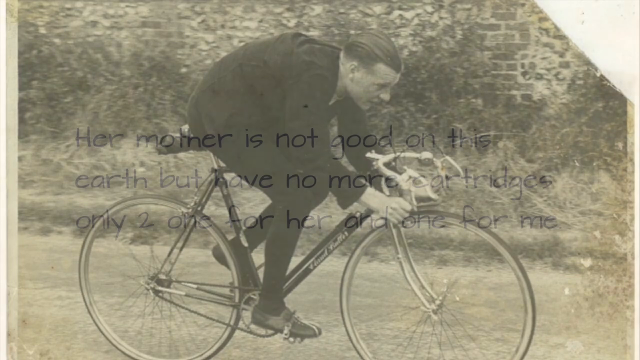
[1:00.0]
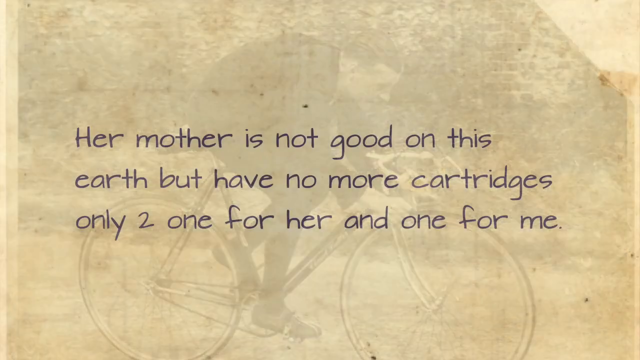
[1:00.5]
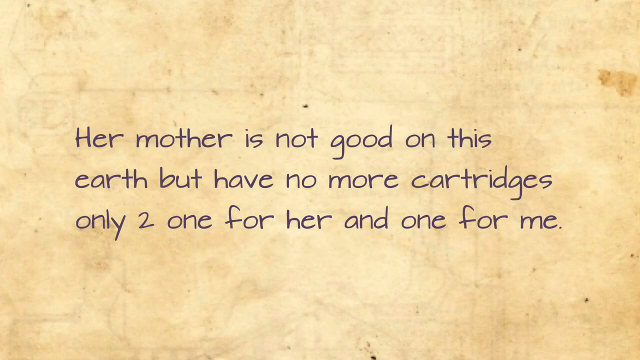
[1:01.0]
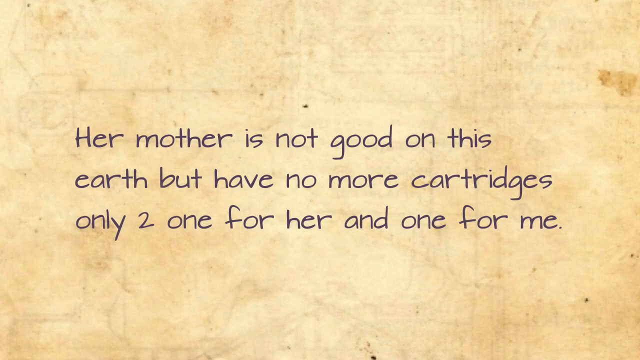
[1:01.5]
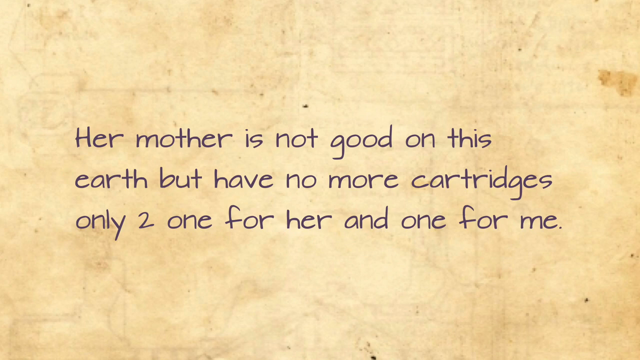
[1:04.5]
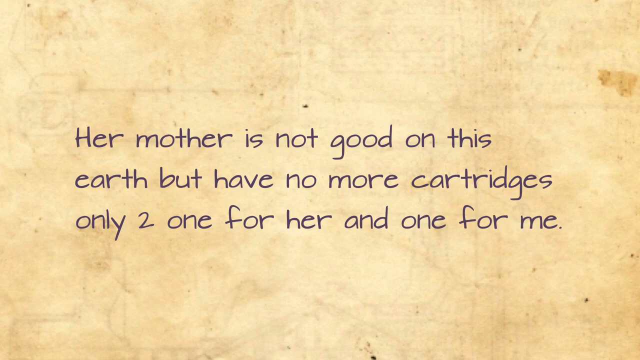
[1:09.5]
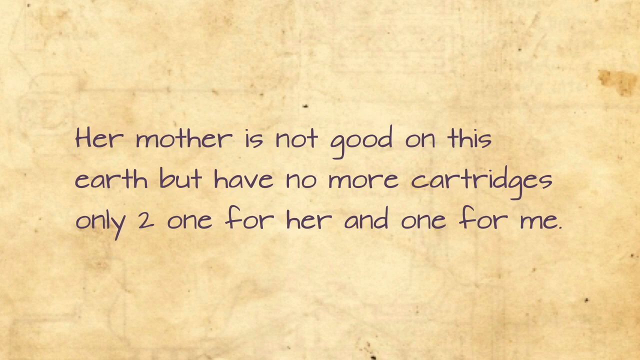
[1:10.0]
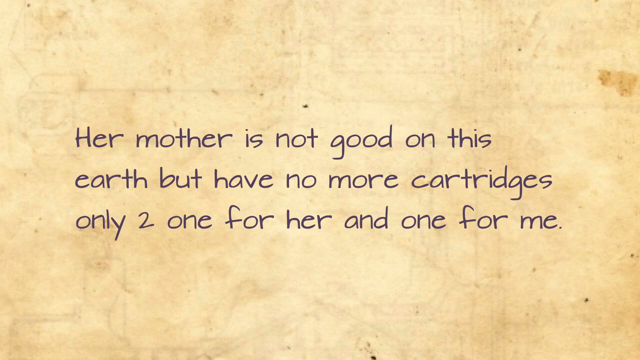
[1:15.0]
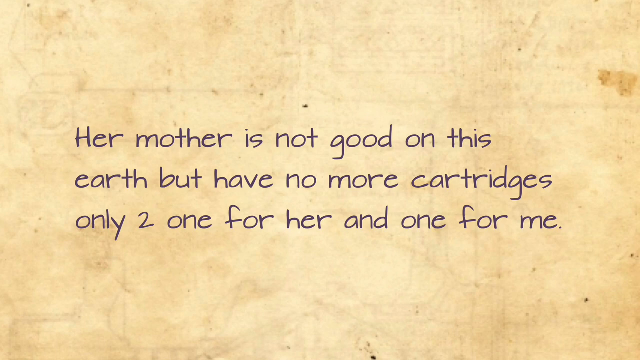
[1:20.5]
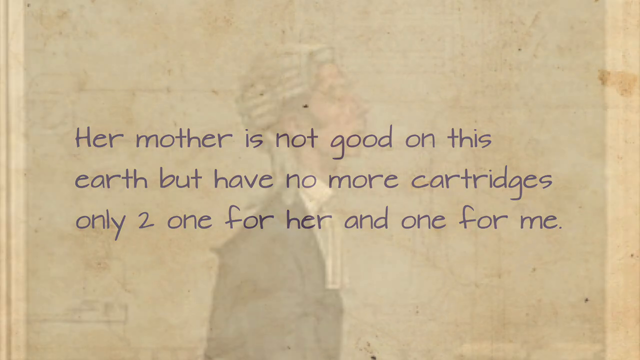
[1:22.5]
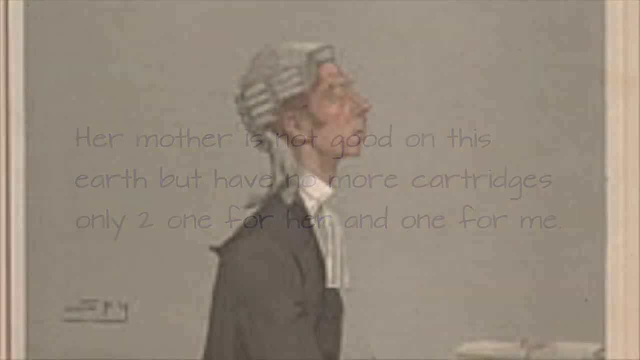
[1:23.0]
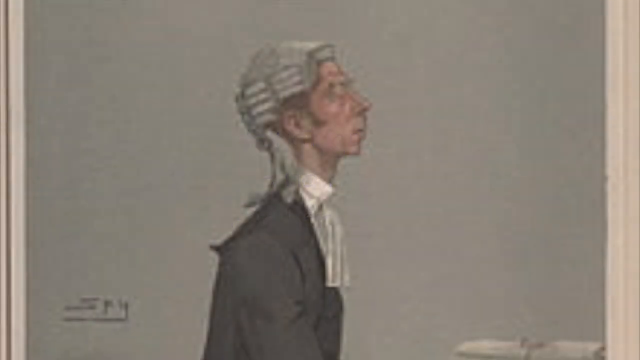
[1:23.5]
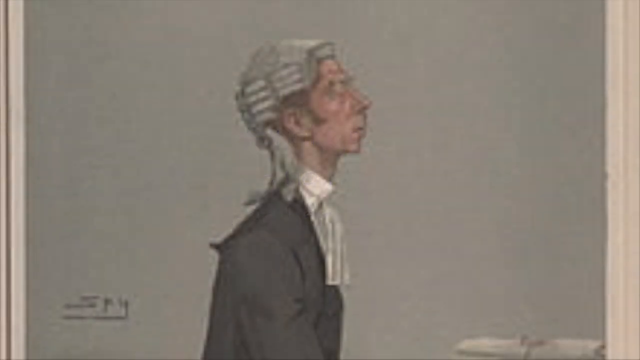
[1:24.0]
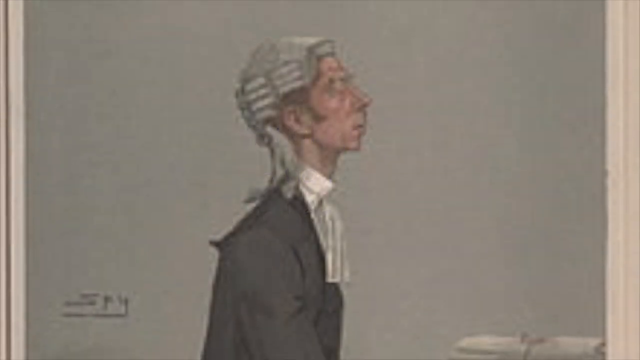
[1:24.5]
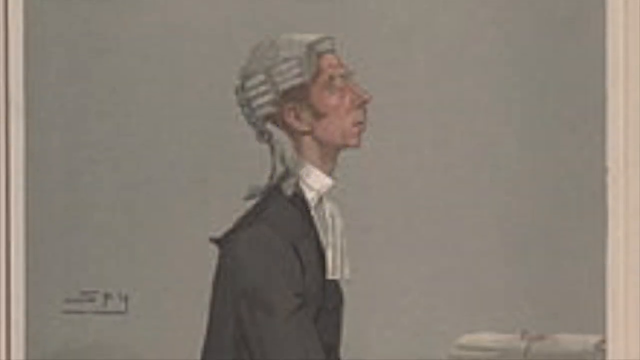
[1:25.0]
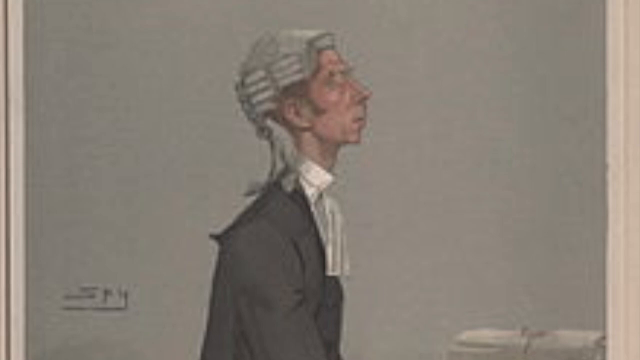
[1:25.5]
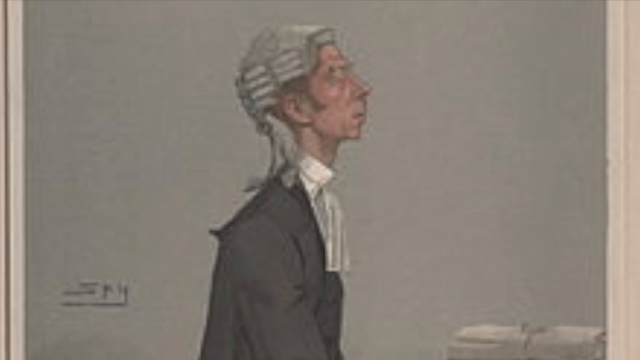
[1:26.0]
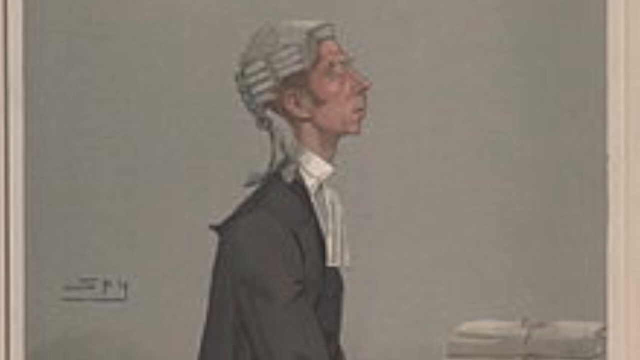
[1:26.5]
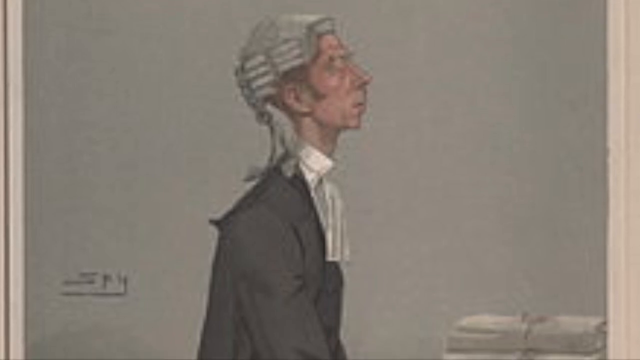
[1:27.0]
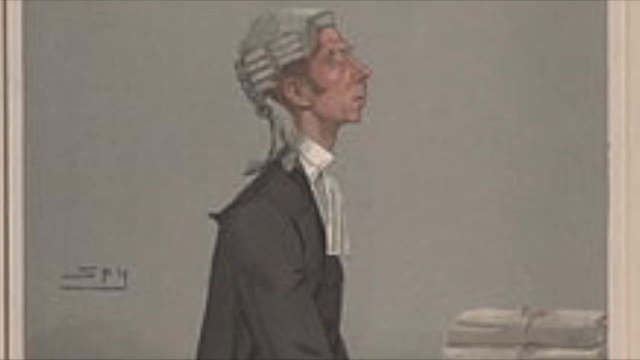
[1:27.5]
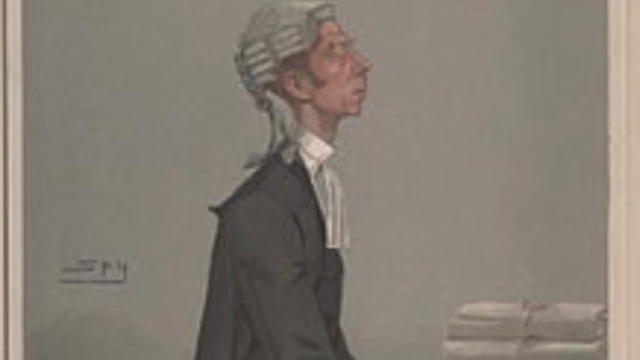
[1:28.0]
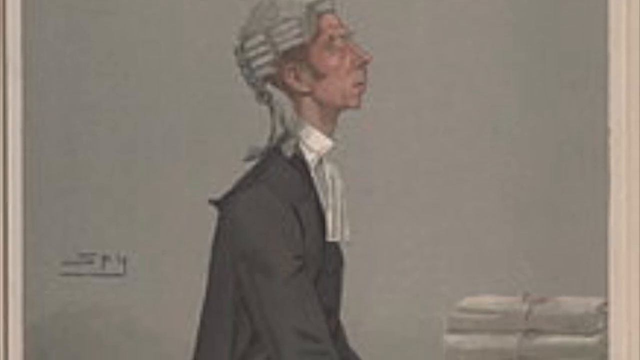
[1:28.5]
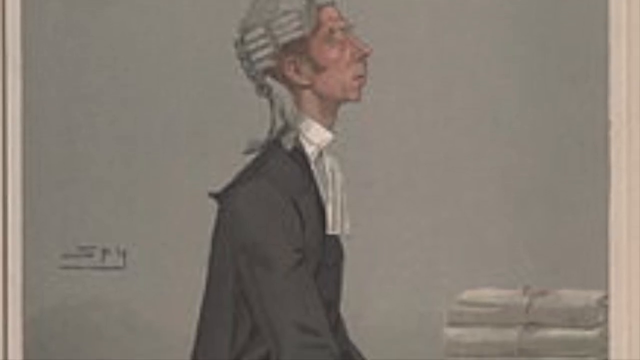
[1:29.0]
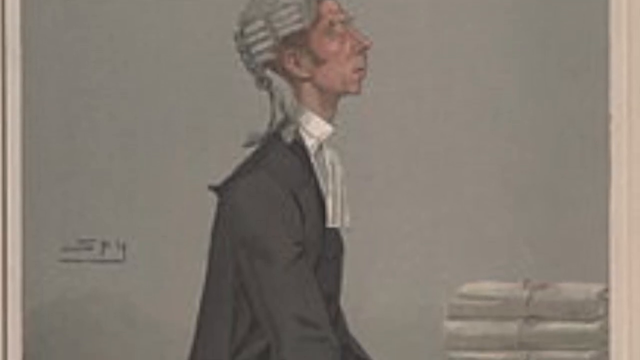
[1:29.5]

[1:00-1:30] What appears to be a handwritten note fills the view, reading in dark text: "her mother is not good on this earth, but have no more cartridges, only two, one for her and one for me." The text is on a yellowed, weathered-looking piece of paper. The shot stays on the note for about 22 seconds with nothing else happening. A fade then leads to a painting of a man, and the camera slowly begins panning down it. The man stands facing toward the right, has white hair with curls on the side, and wears a shirt with a handkerchief coming out of the front of the suit. He stands on a gray background. The camera slowly pans down toward the bottom of the frame.